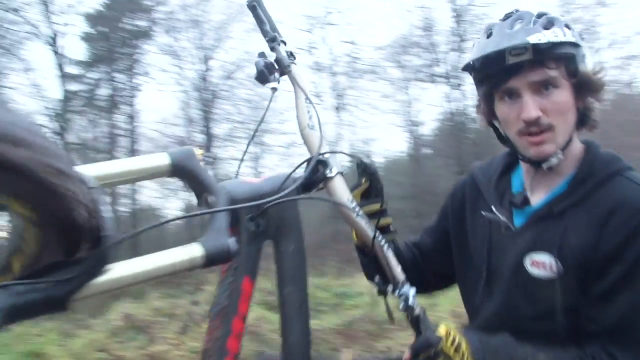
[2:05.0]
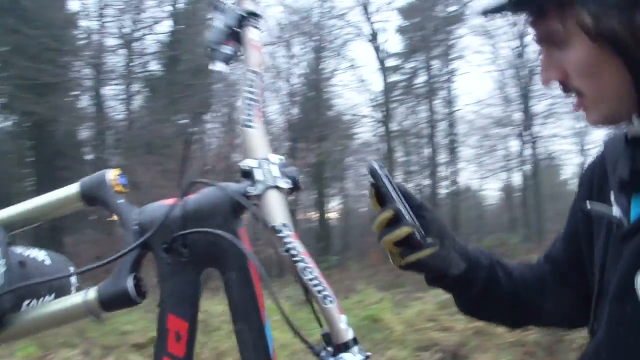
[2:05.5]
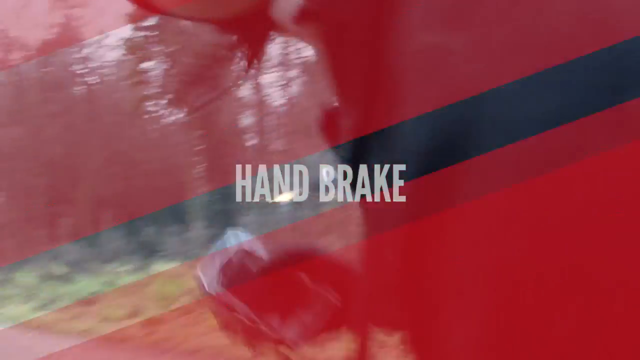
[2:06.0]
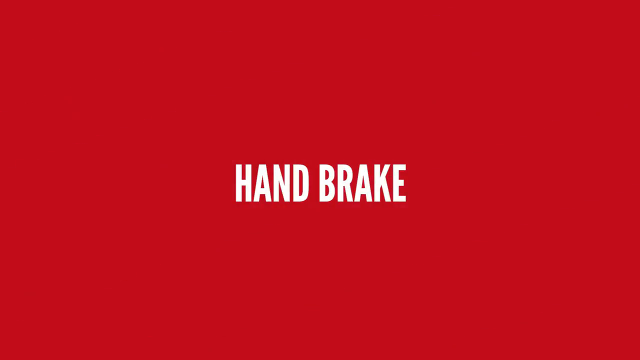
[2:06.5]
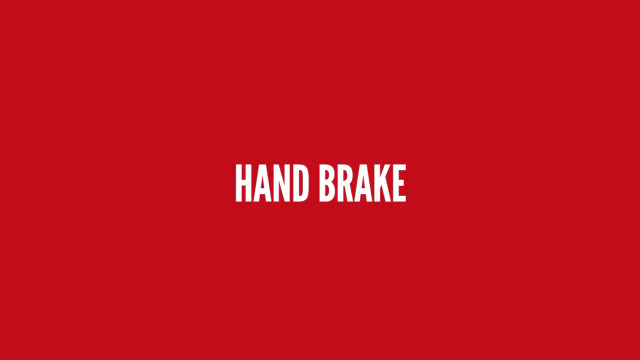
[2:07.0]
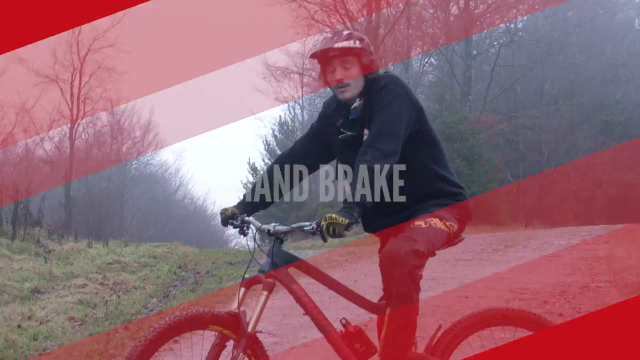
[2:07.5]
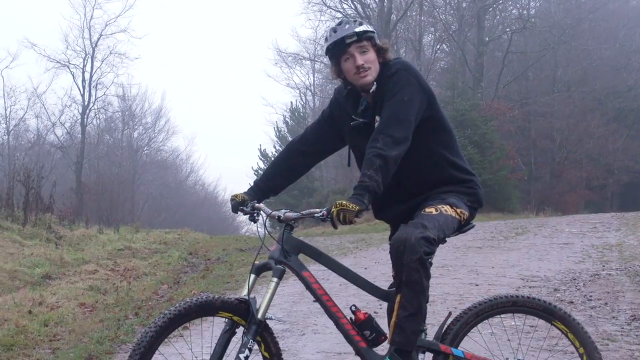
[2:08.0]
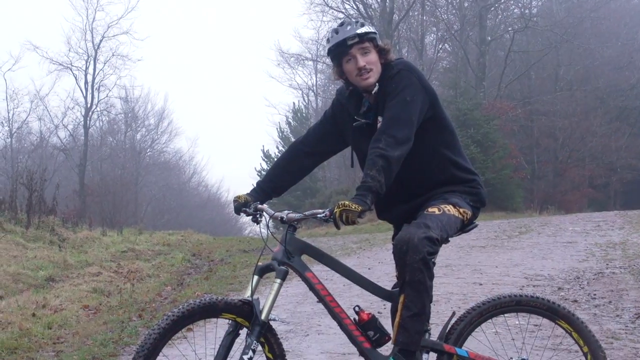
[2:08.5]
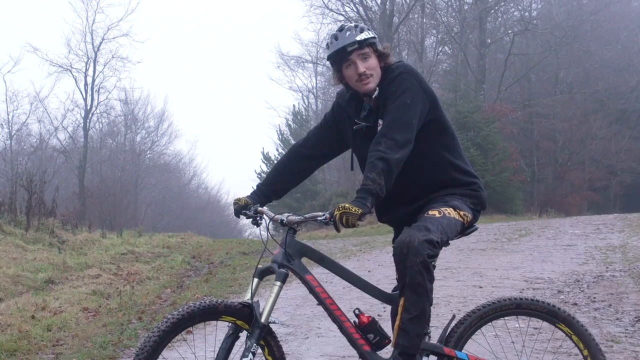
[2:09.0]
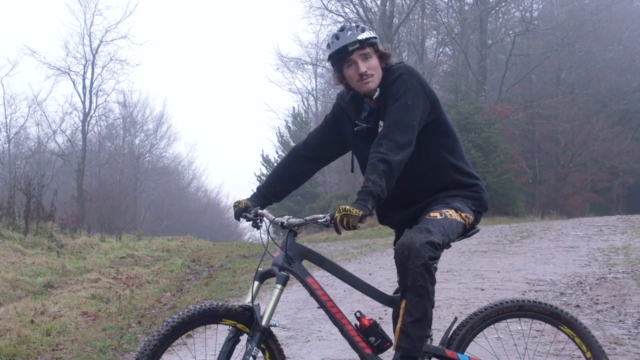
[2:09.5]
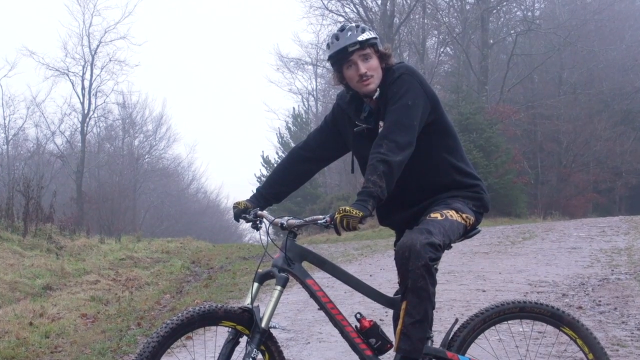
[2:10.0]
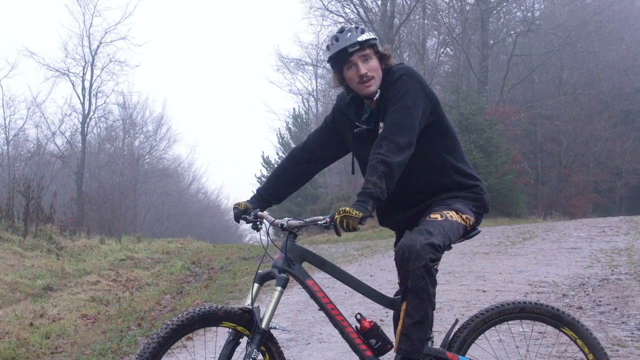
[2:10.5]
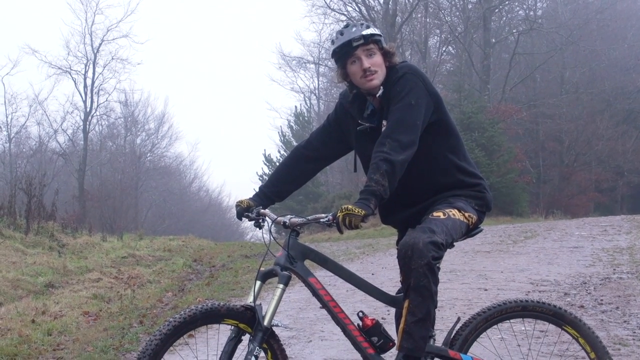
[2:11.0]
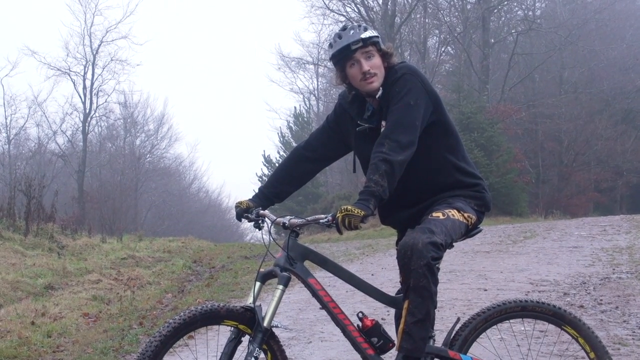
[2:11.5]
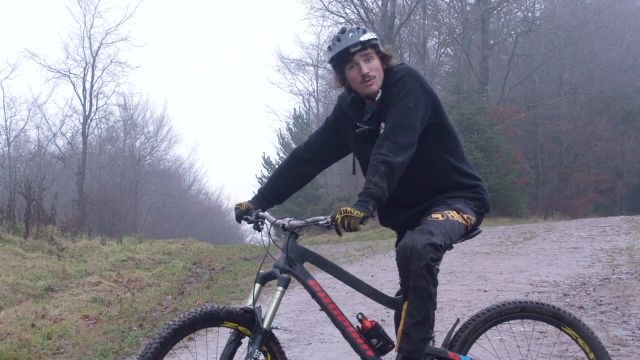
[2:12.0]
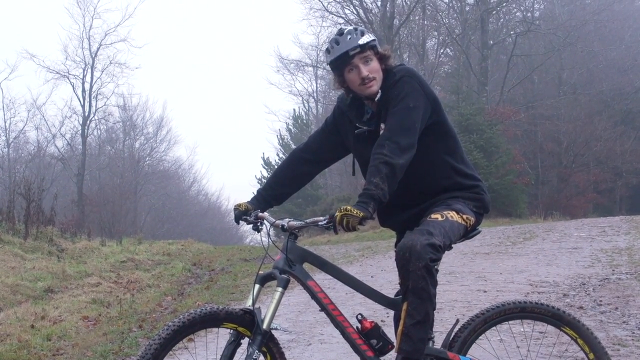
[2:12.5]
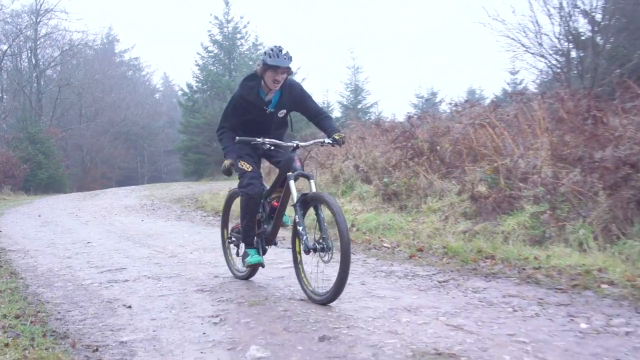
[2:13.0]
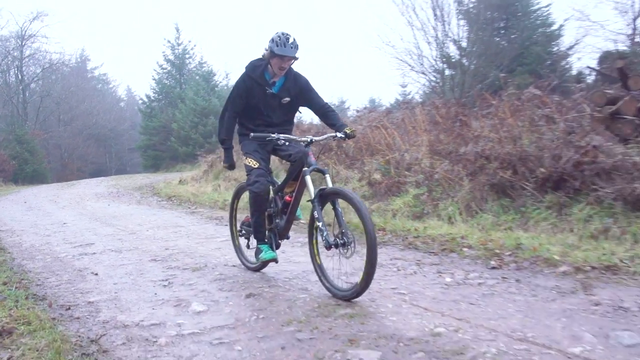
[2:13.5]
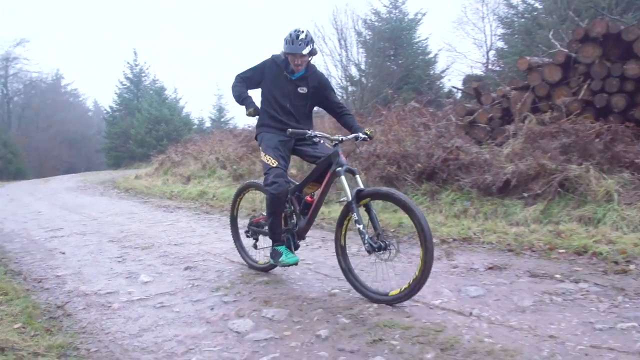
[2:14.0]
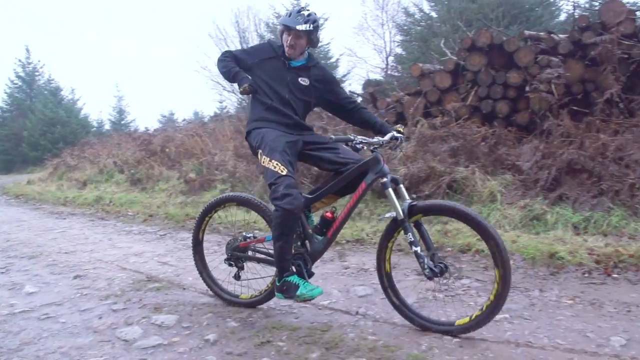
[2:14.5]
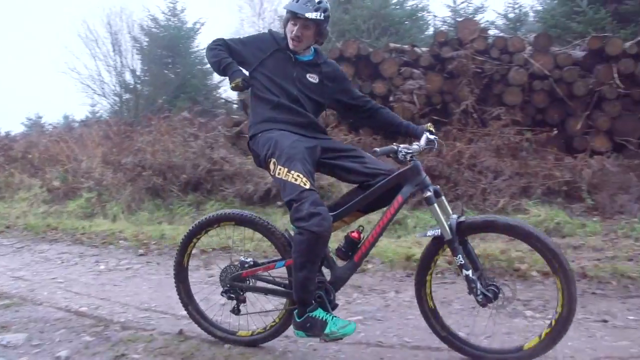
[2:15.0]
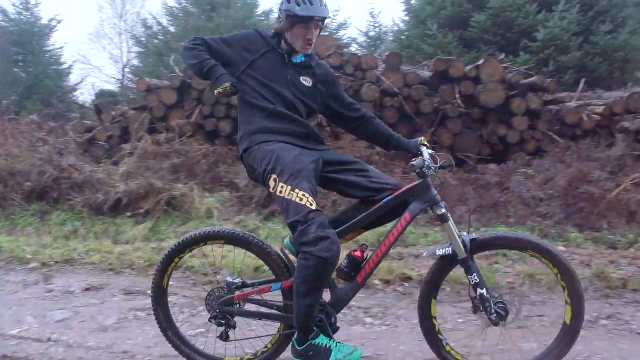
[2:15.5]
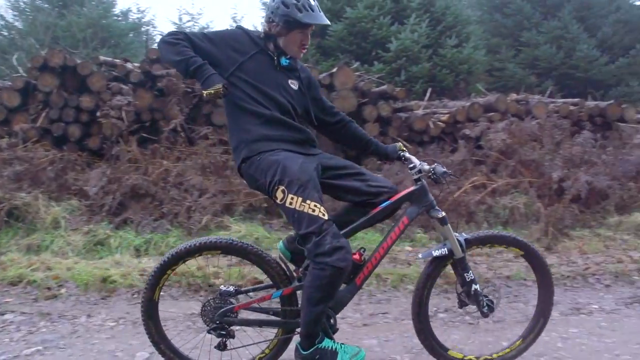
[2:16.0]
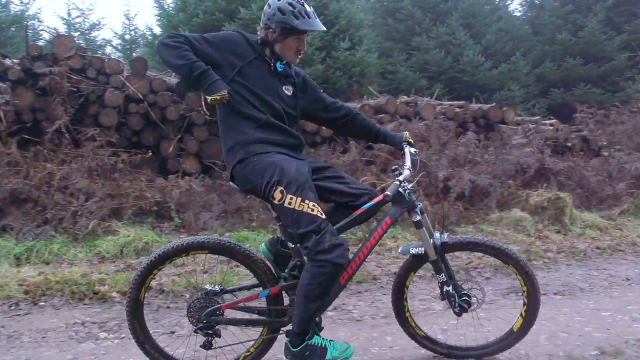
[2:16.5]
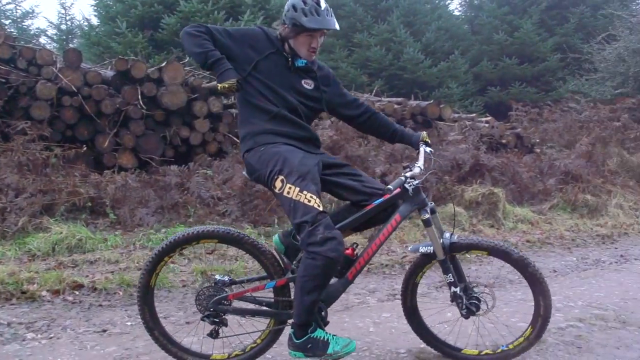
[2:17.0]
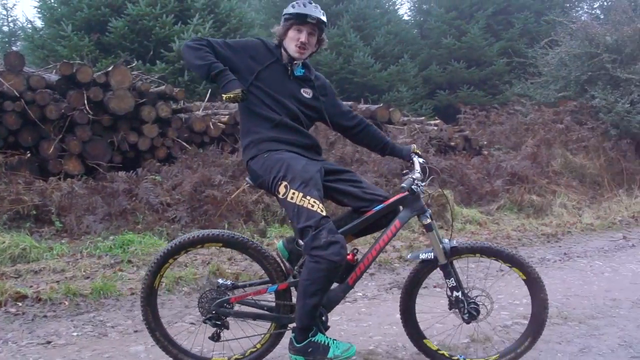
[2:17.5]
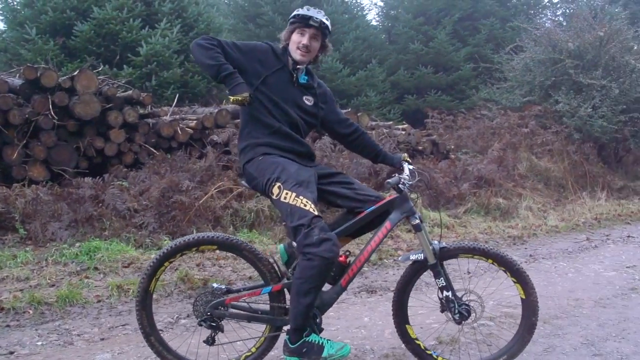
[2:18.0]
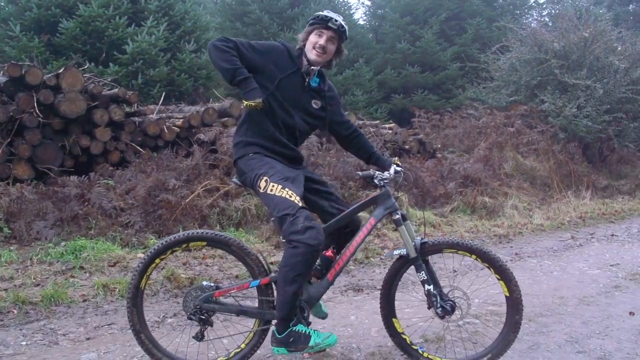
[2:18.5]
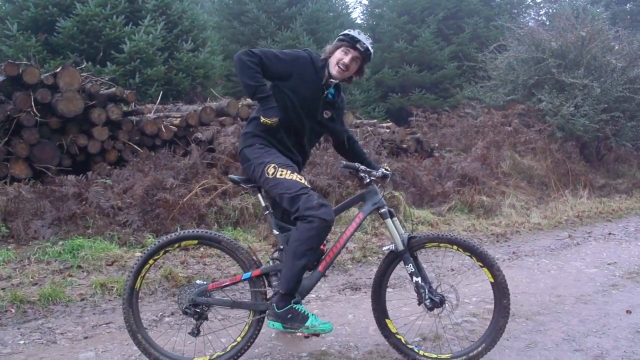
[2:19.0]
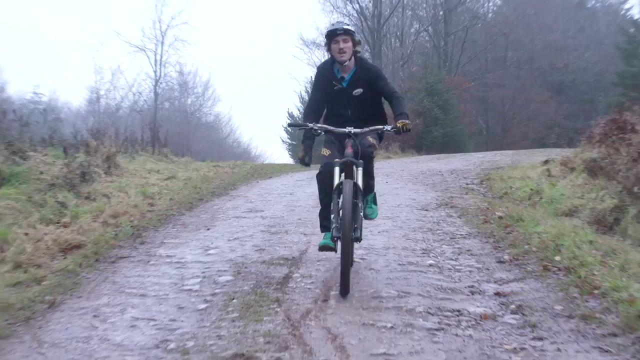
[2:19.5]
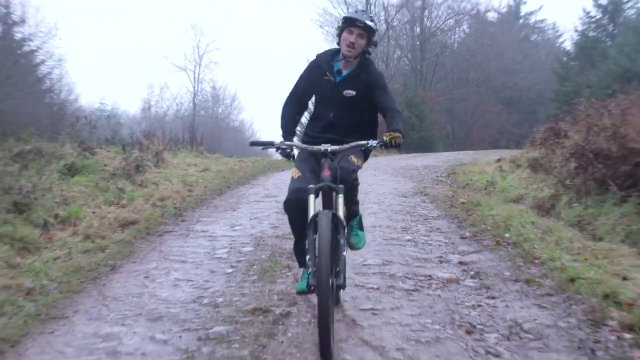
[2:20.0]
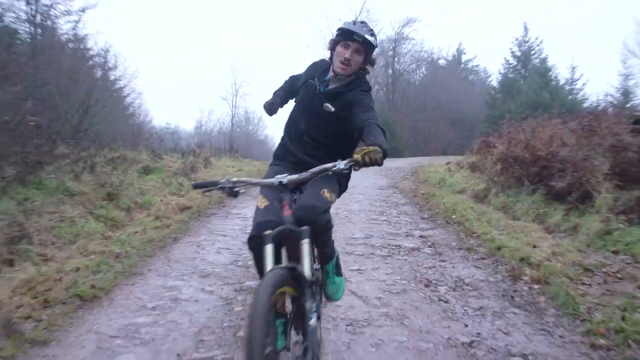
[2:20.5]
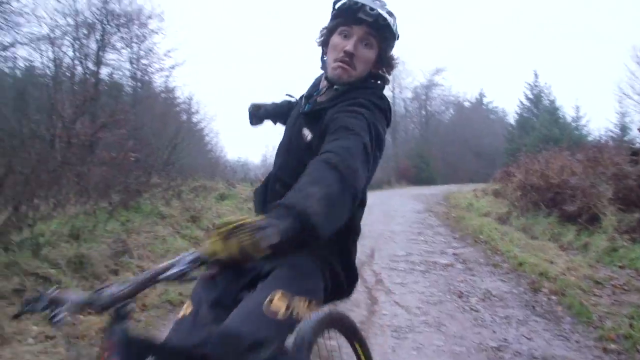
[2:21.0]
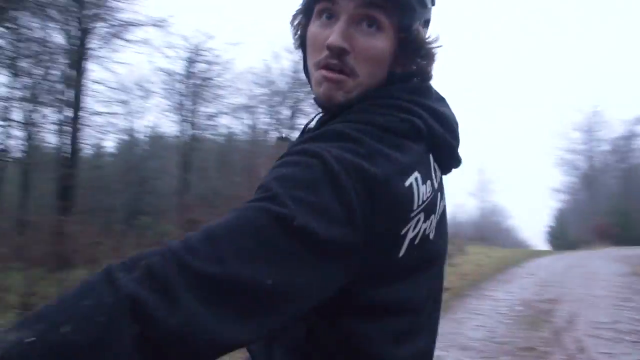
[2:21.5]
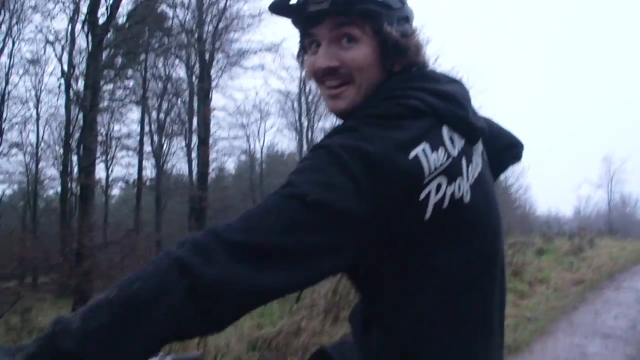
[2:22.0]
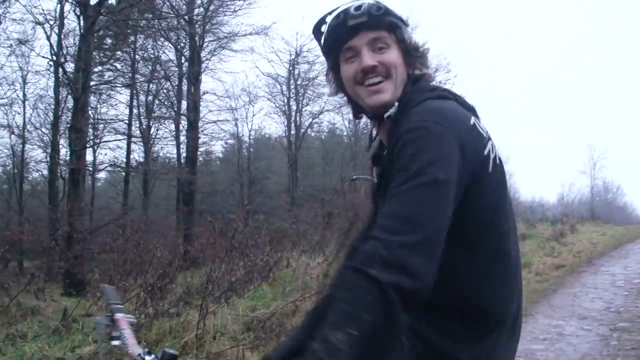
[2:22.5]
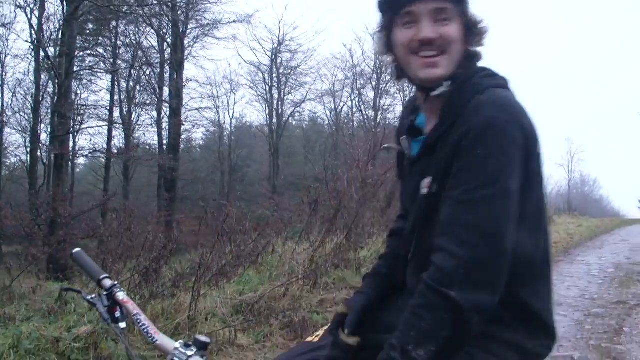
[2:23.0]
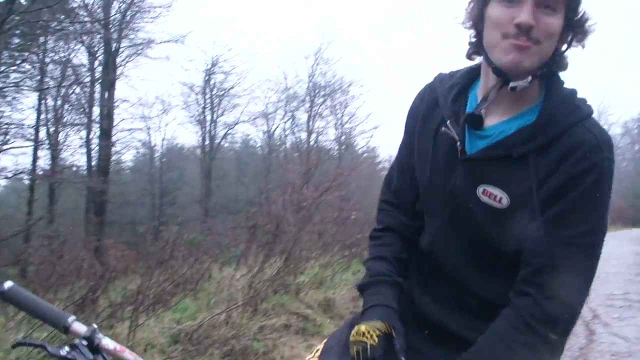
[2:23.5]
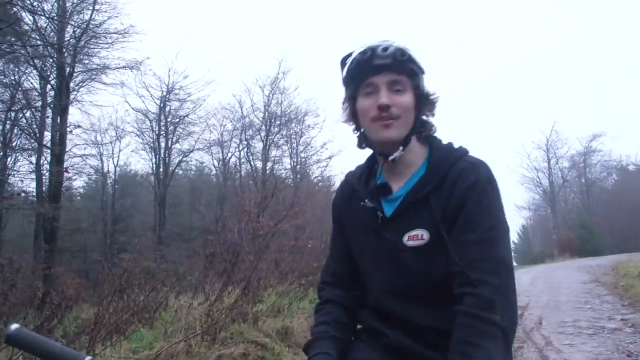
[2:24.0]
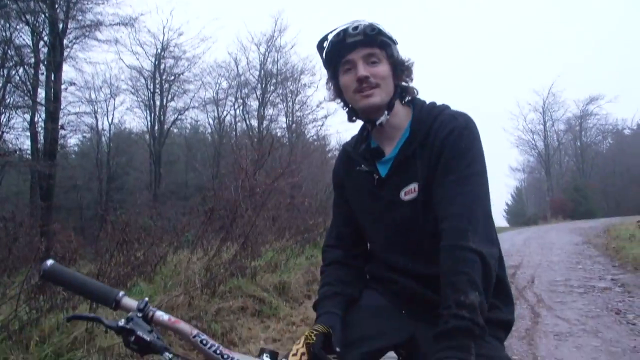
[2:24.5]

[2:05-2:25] The next trick is shown, possibly called handbrake. The guy apparently explains it first, then rides down the road and pulls his right arm back as if pulling on a brake. The bike slows down and stops, as though the motion stopped the bike. He is smiling about it.